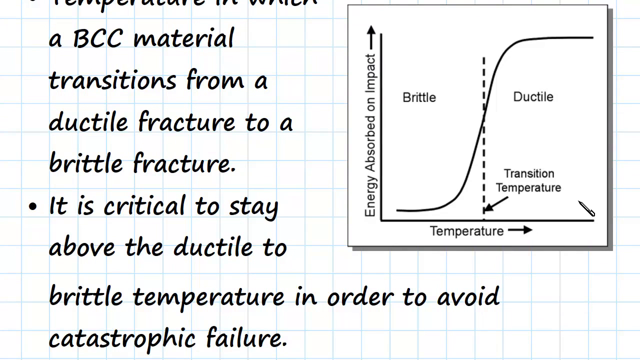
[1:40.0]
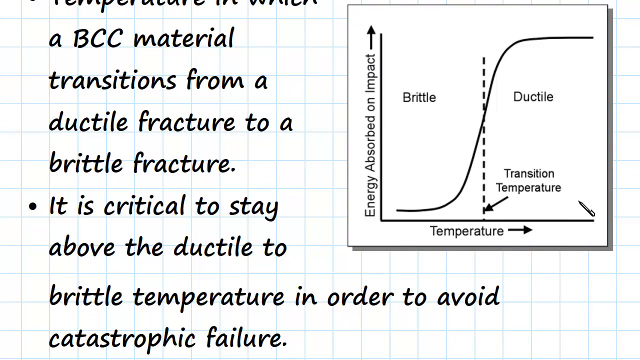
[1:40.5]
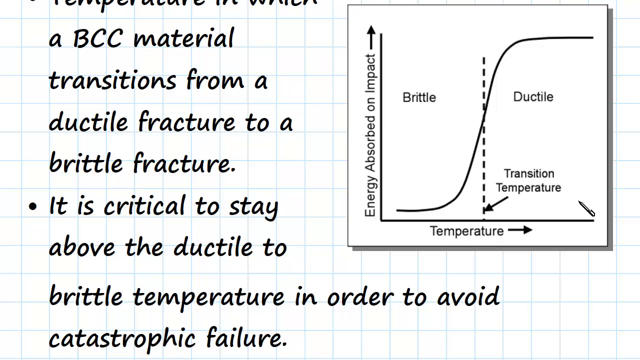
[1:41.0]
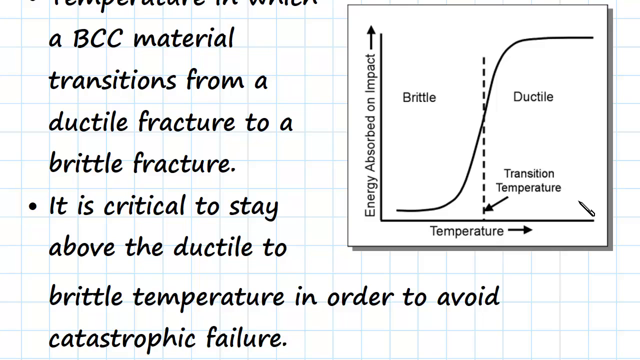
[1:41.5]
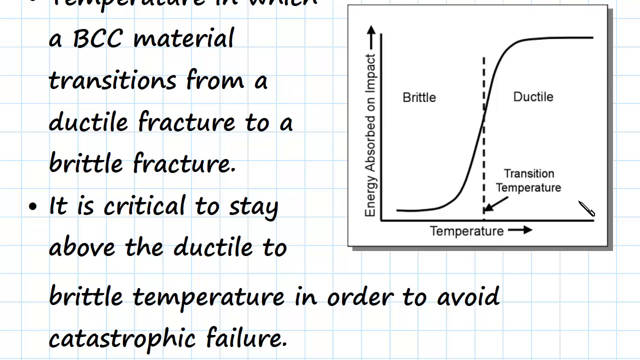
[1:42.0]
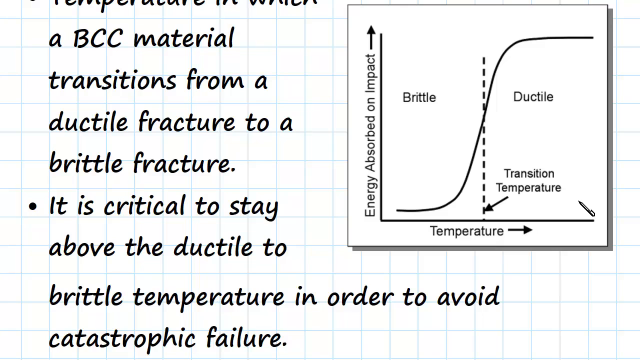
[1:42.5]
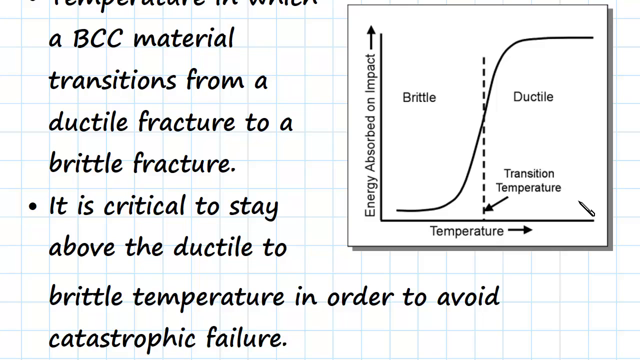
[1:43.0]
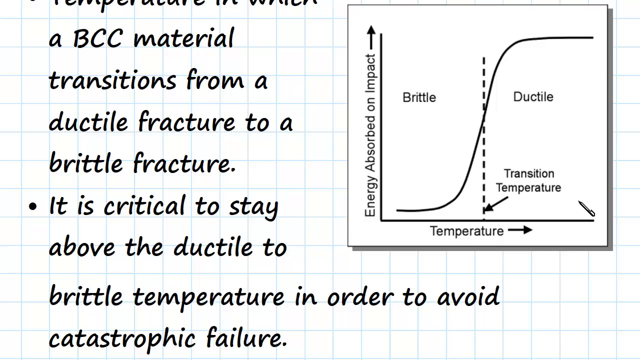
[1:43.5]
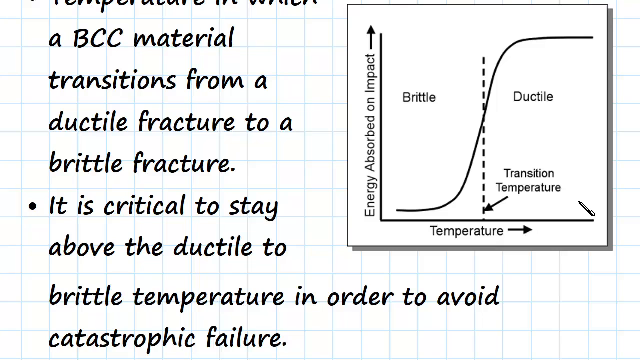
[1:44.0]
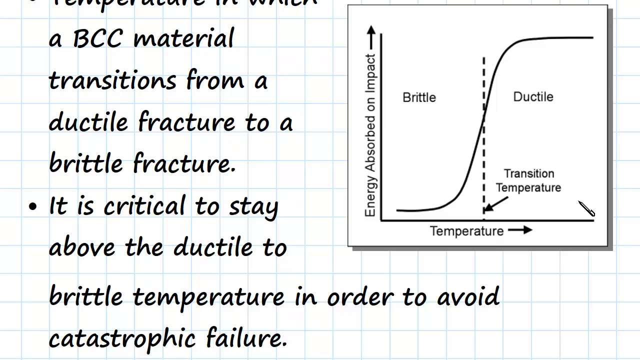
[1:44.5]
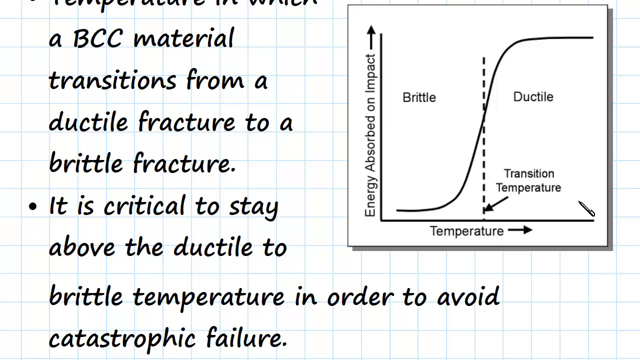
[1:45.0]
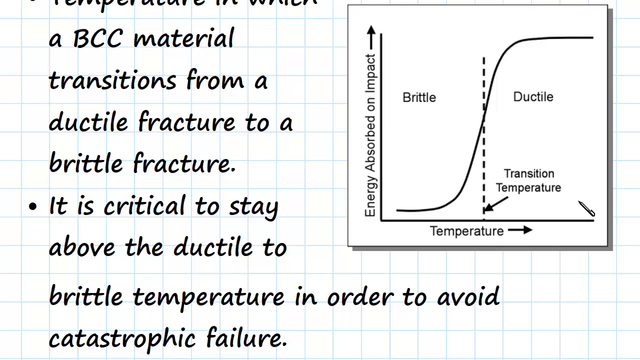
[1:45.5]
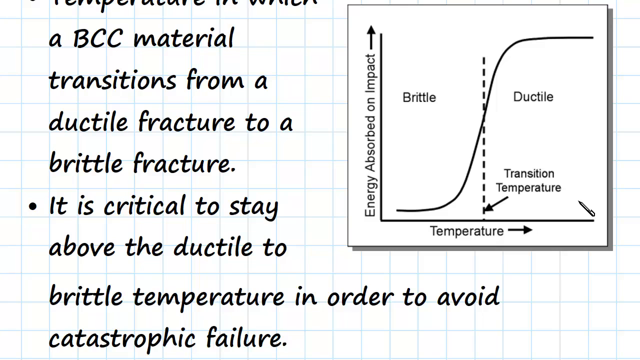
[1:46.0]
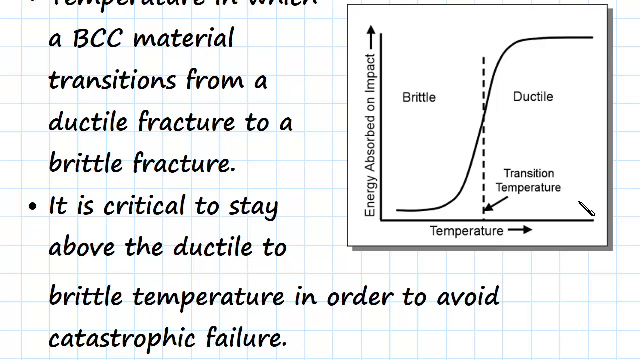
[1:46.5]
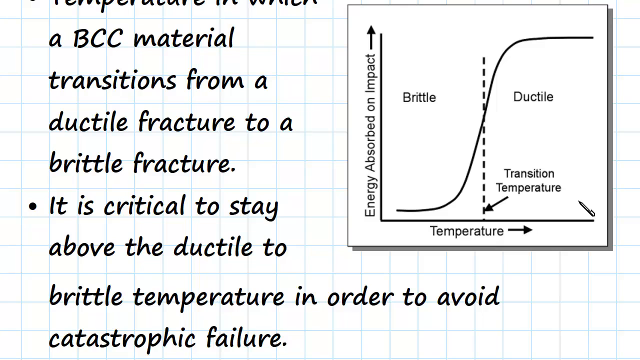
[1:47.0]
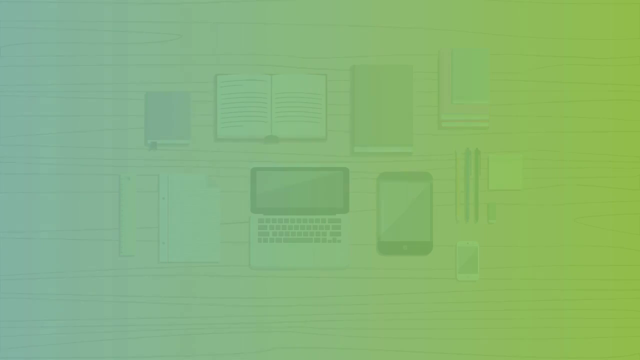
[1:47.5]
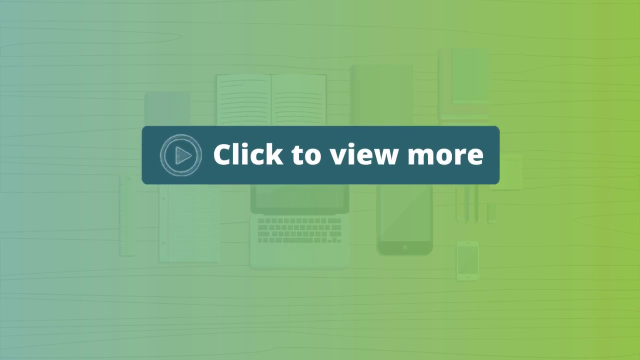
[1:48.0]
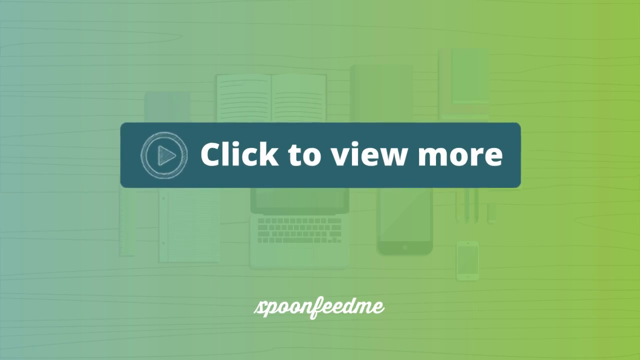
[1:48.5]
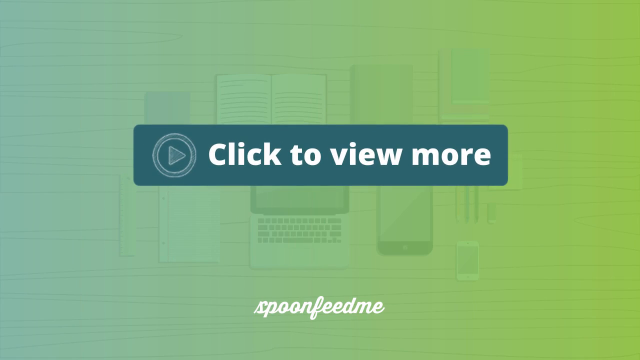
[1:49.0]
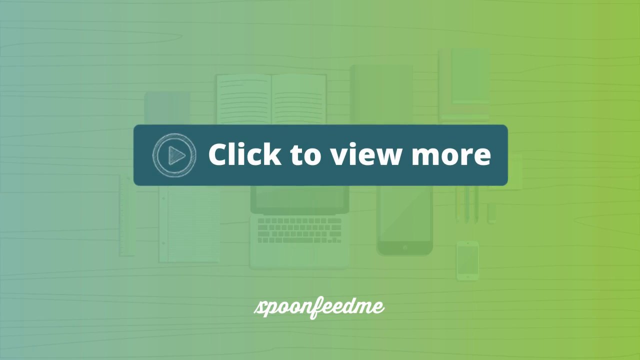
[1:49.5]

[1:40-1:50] The white grid background with blue lines shows the words "BCC material transitions from a ductile fracture to a brittle fracture" and "it is critical to stay above the ductile to brittle temperature in order to avoid catastrophic failure". On the right-hand side is a line graph representing those words, with the pen-shaped mouse pointer inside it on the lower right-hand side. The scene then transitions to a light green background containing books, laptops, phones, pens, a notepad, an eraser and a ruler. The words "click to view more" slowly fade in on a blue bar with a play sign to their left, and at the bottom of the screen the text reads "spoon feed me".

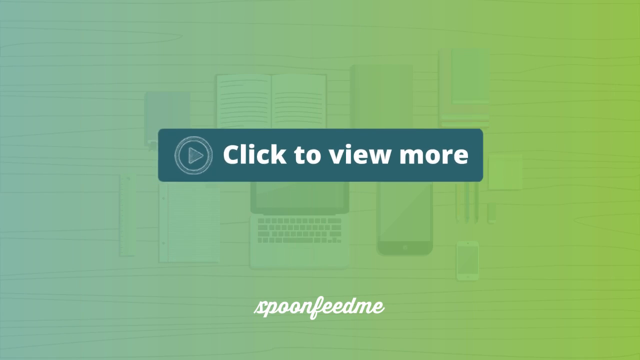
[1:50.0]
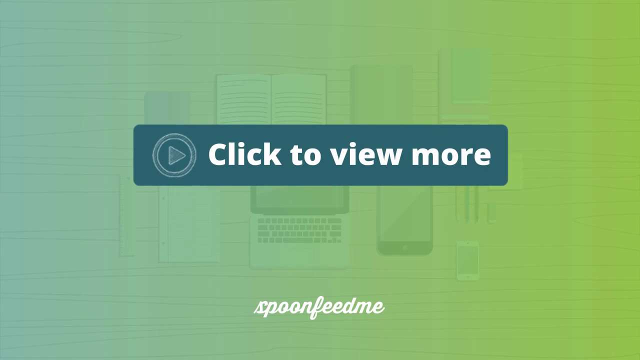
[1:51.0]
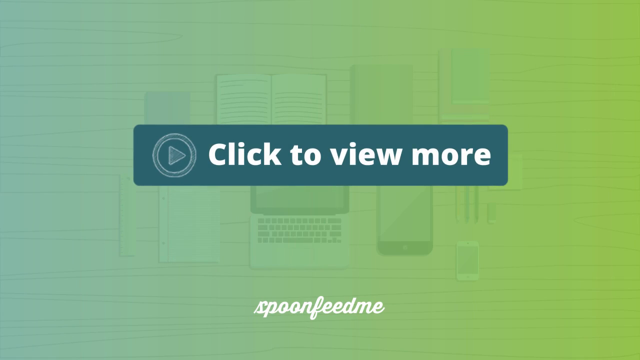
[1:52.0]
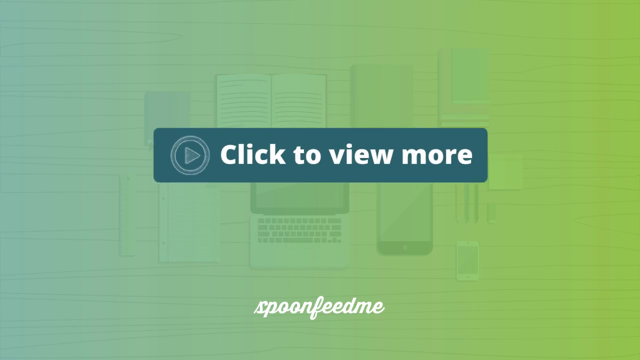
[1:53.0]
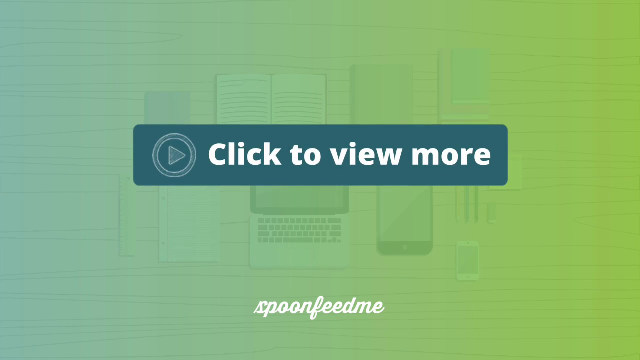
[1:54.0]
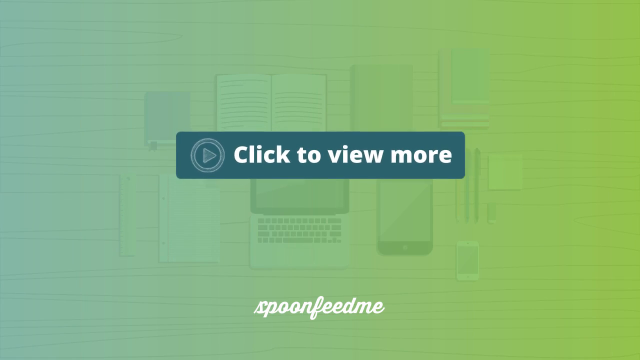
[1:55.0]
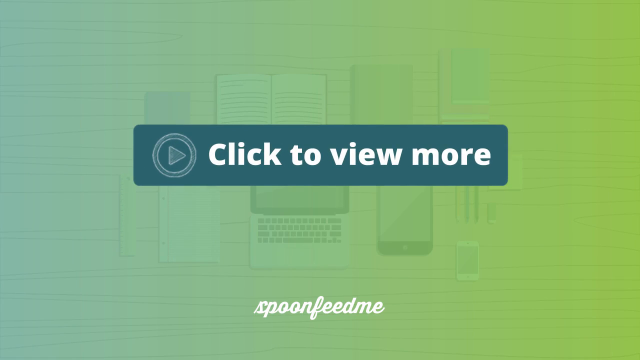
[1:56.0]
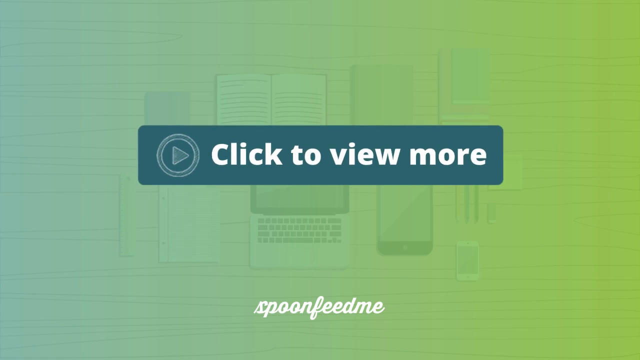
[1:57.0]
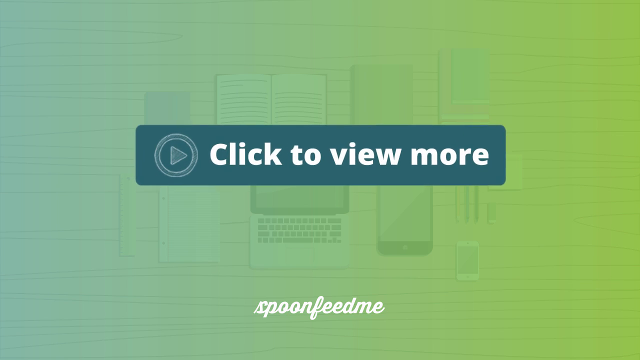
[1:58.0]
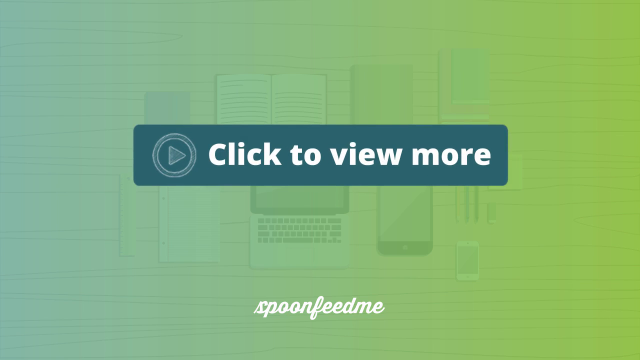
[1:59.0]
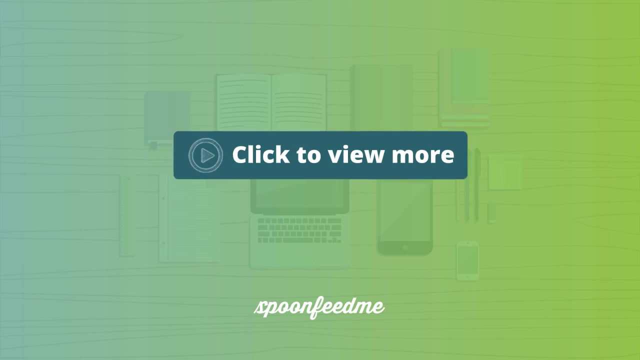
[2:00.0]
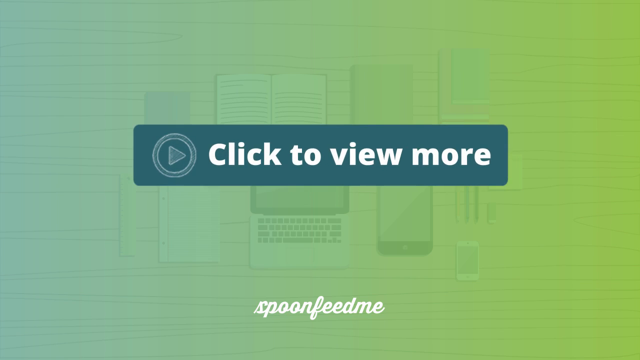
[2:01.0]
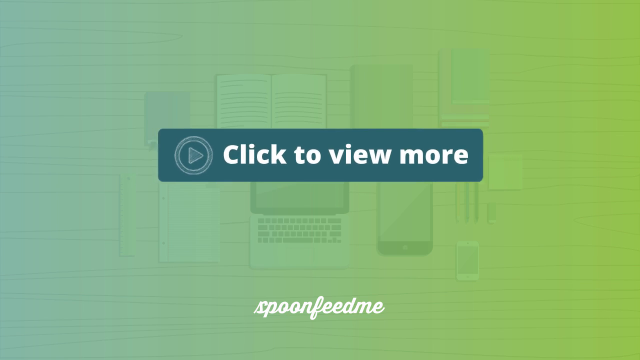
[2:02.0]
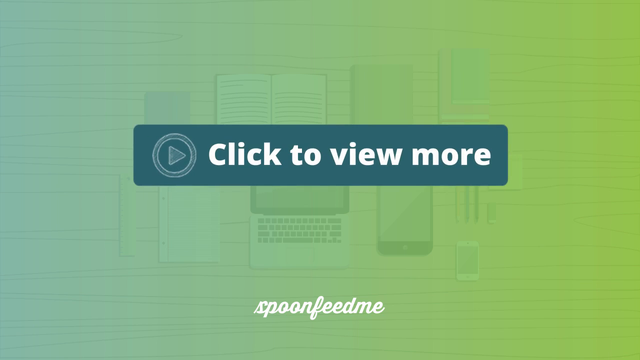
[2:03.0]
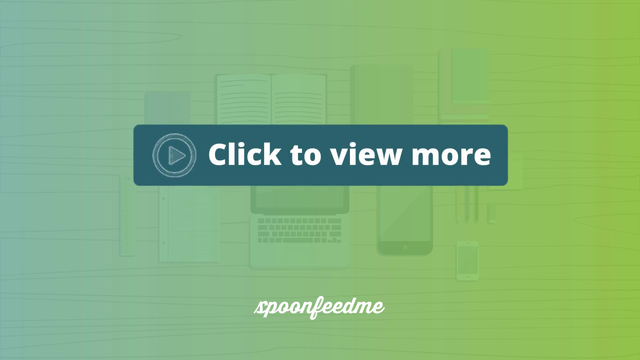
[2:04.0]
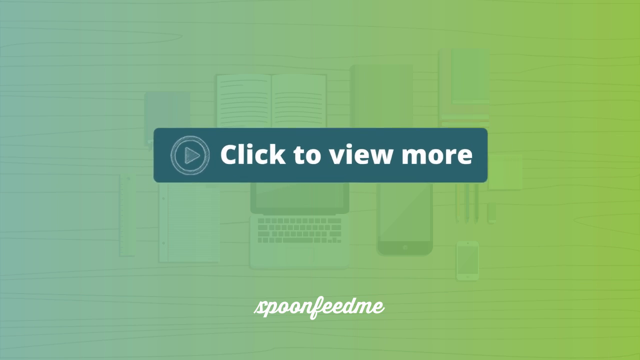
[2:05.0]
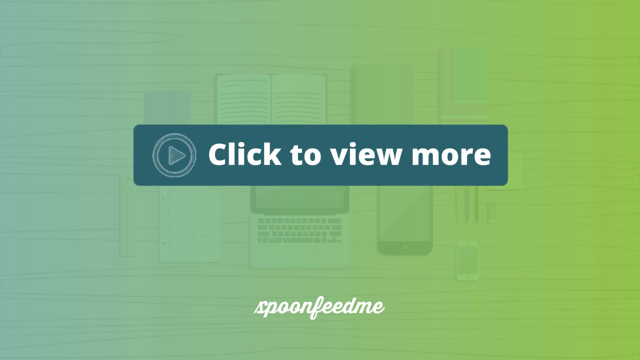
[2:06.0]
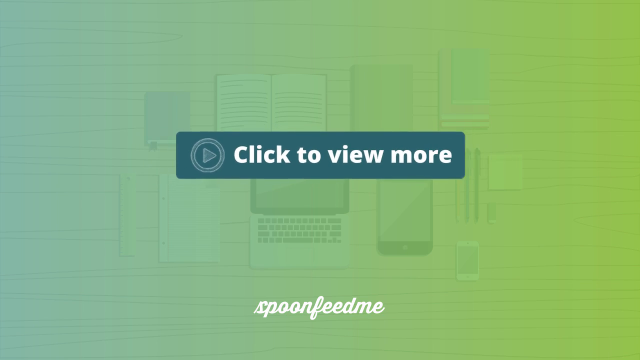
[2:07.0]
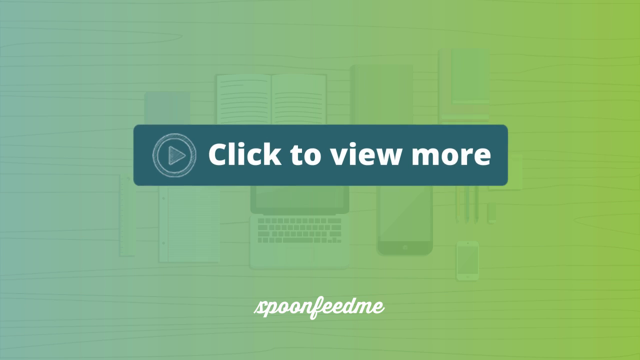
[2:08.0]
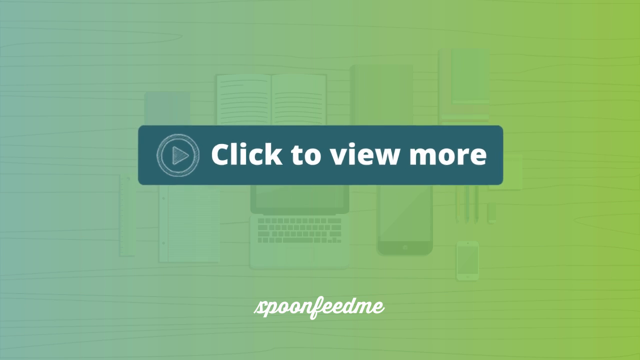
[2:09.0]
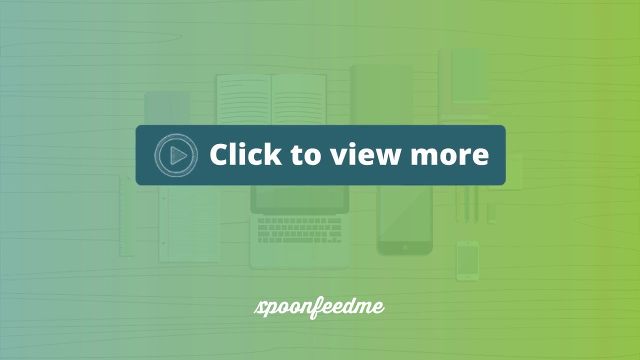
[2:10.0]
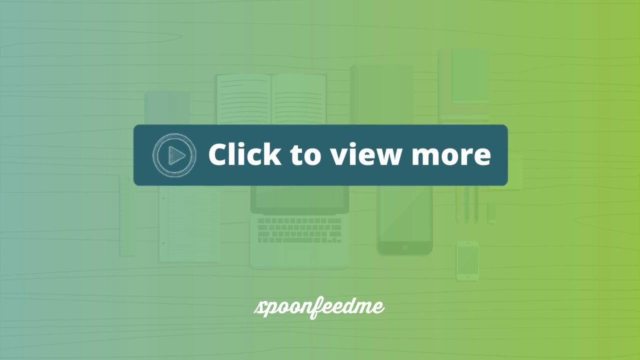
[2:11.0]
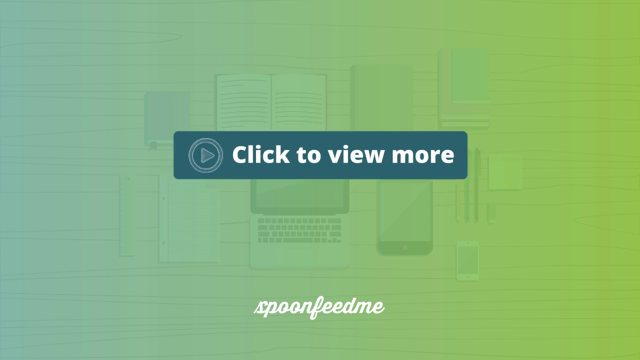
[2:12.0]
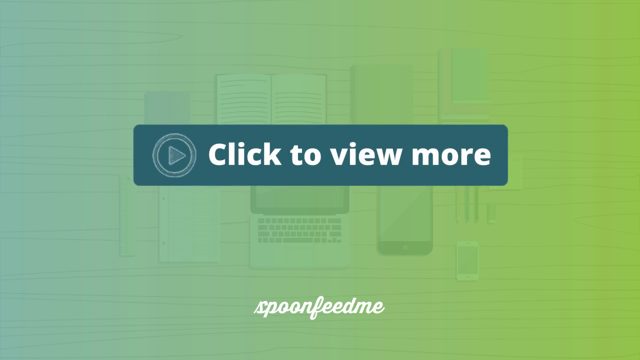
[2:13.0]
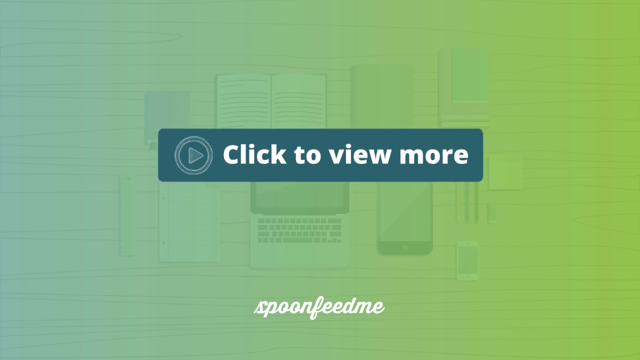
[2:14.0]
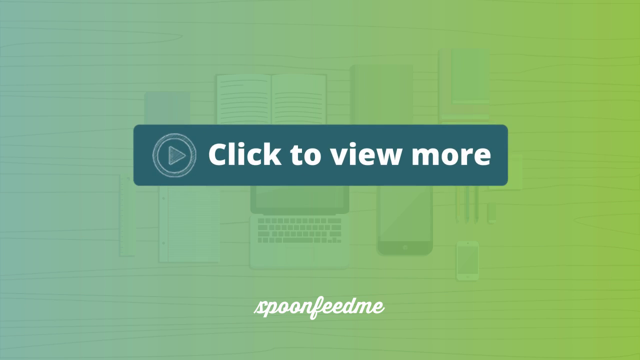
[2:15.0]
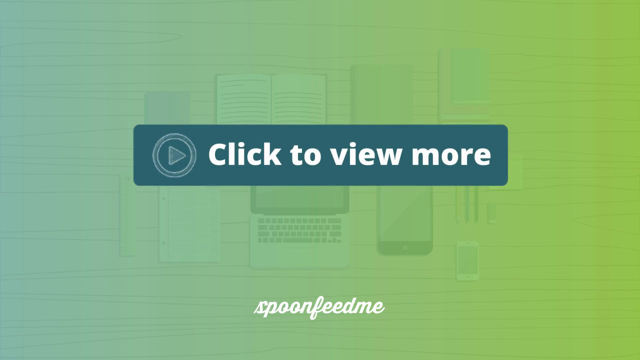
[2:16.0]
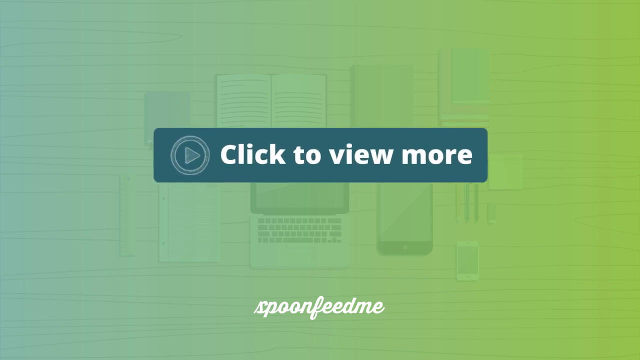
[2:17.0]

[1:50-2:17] A light green background contains books, pens, pencils, a ruler, a notepad, a journal, an eraser, a tablet and sticky notes. The words "click to view more" on a blue bar with a play sign next to them pulsate constantly back and forth at a steady pace, neither slowing down nor speeding up, while "spoon feed me" is shown at the bottom of the video. When the bar pulses back, the objects in the background are seen more clearly; when it comes forward, it blocks the view of them. Three pens are visible, and on the top right are two books with one smaller book on top.